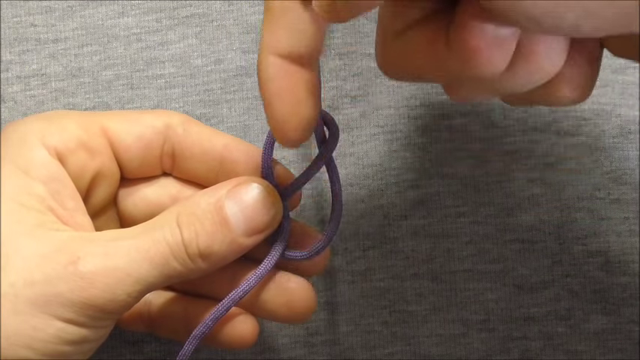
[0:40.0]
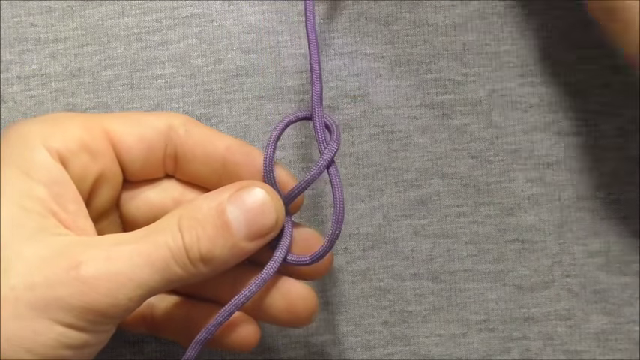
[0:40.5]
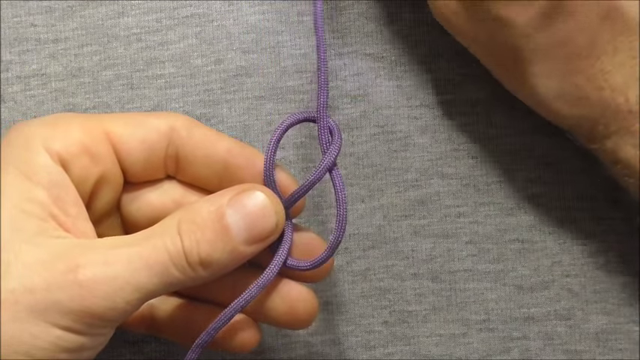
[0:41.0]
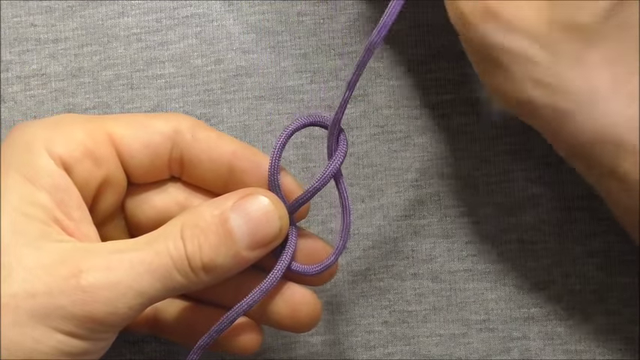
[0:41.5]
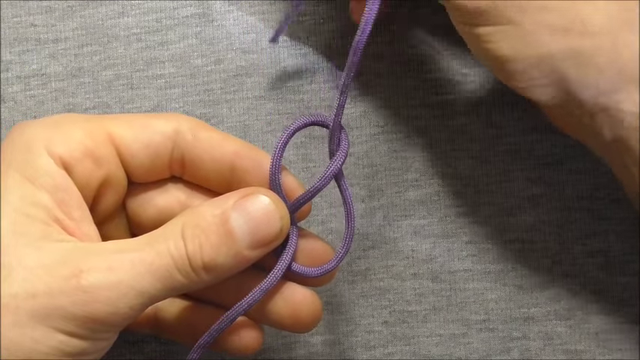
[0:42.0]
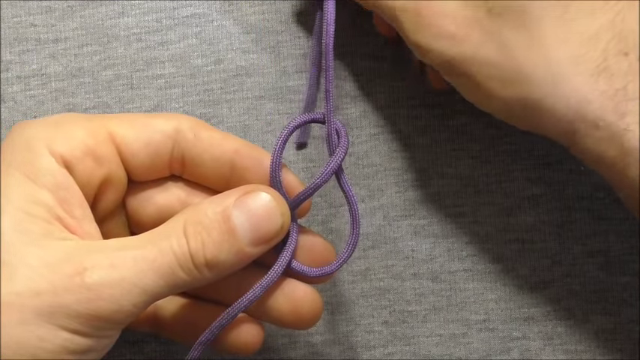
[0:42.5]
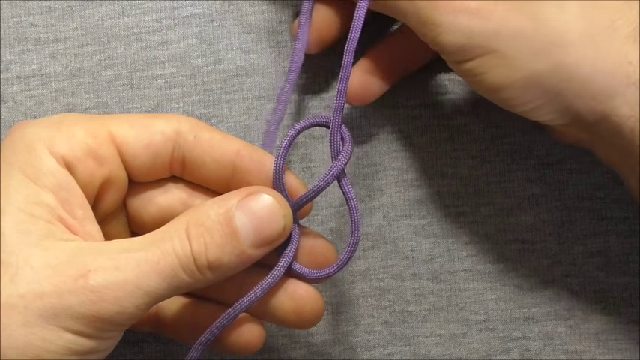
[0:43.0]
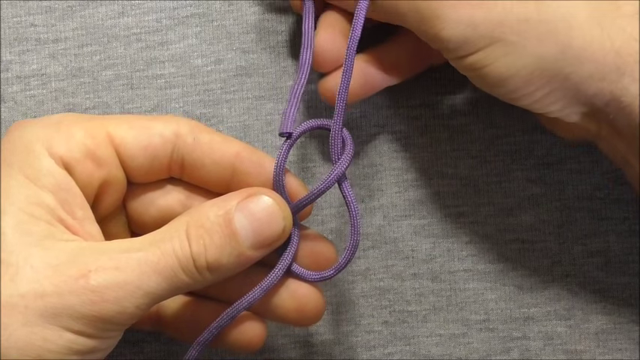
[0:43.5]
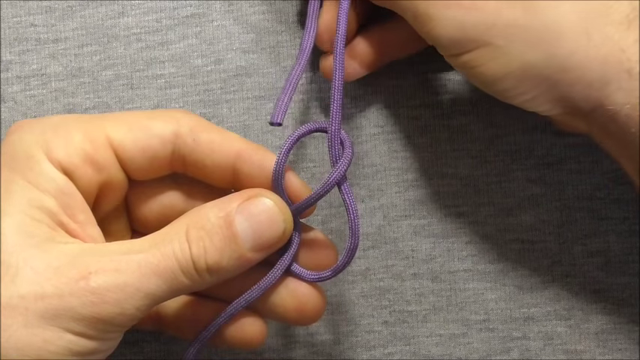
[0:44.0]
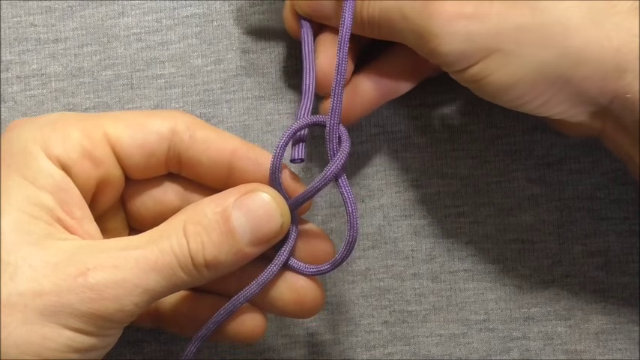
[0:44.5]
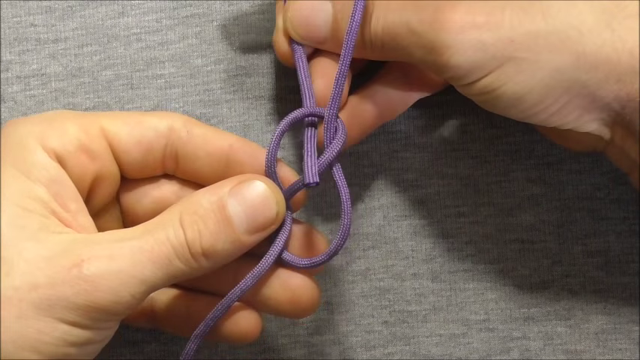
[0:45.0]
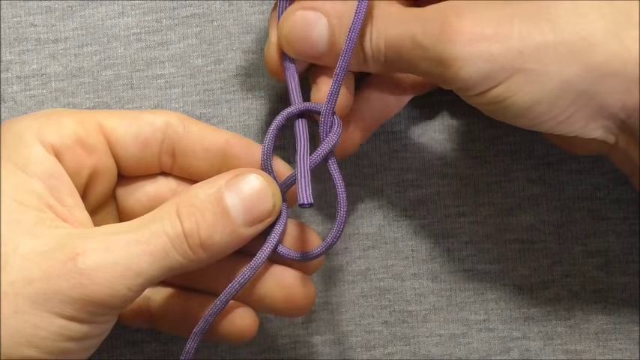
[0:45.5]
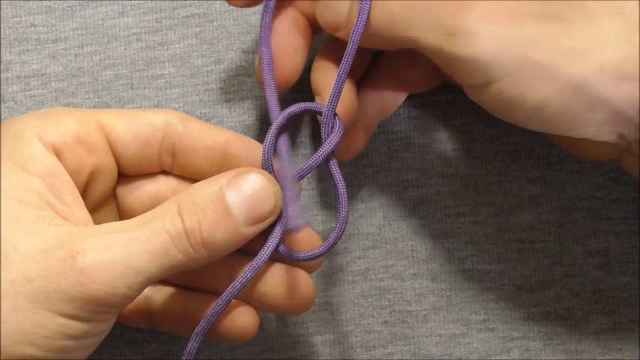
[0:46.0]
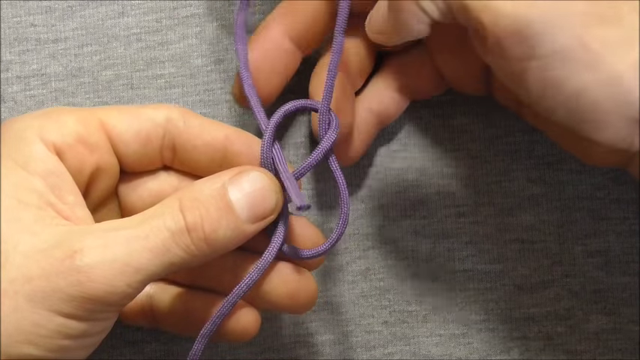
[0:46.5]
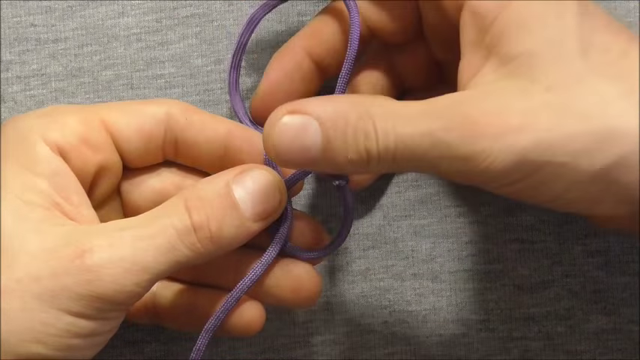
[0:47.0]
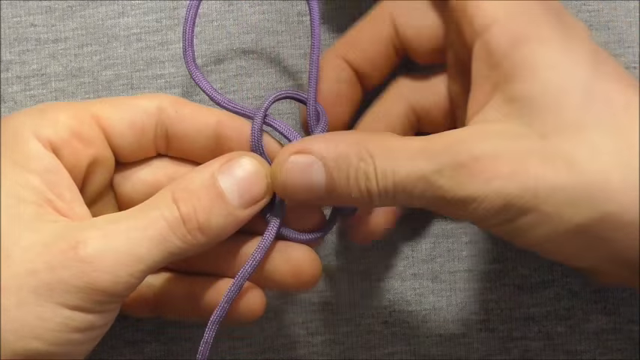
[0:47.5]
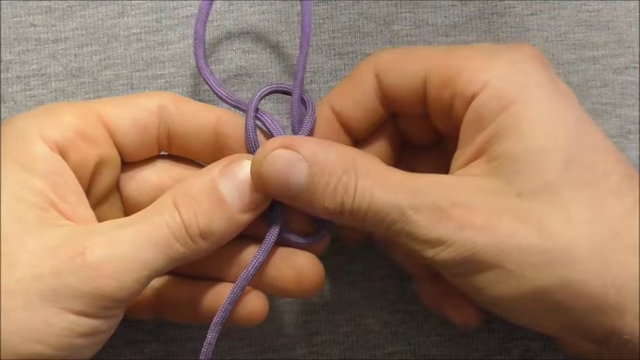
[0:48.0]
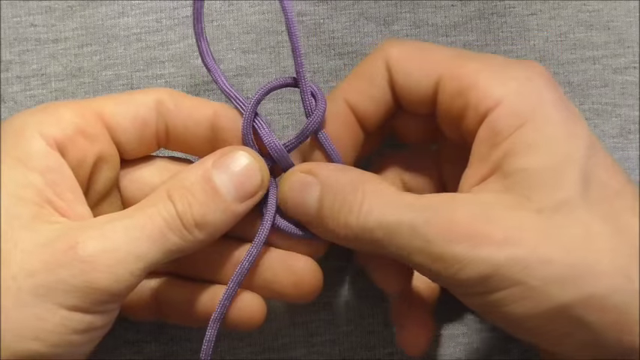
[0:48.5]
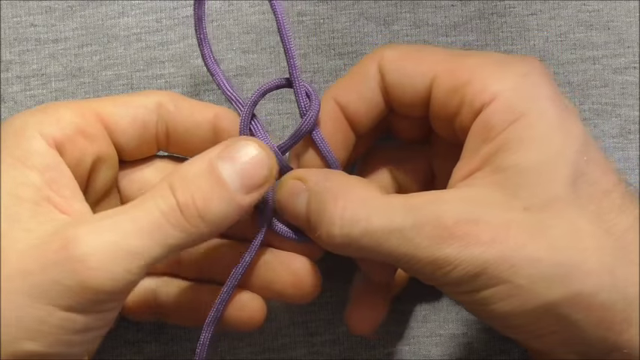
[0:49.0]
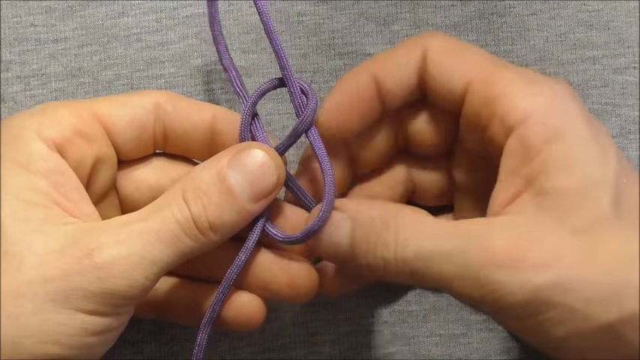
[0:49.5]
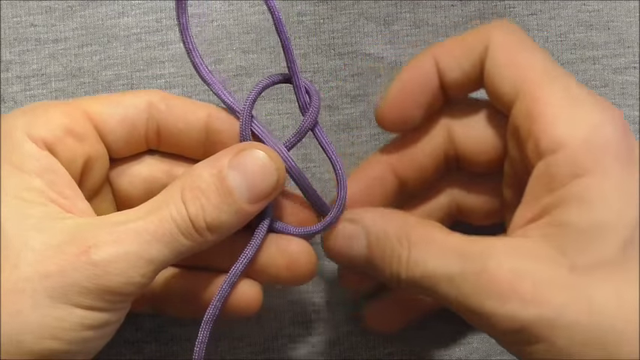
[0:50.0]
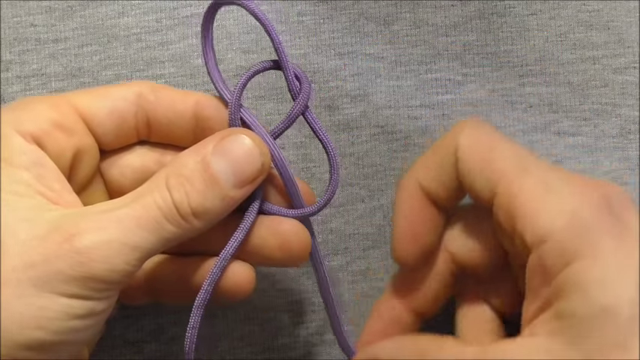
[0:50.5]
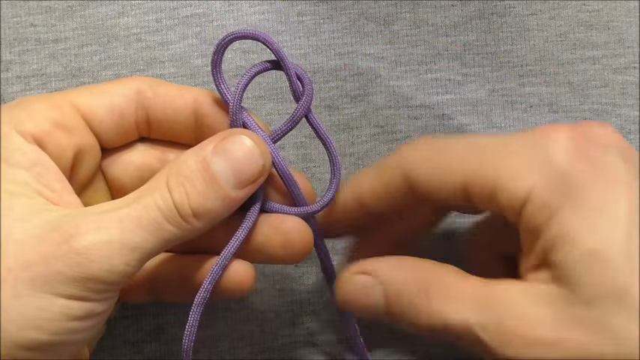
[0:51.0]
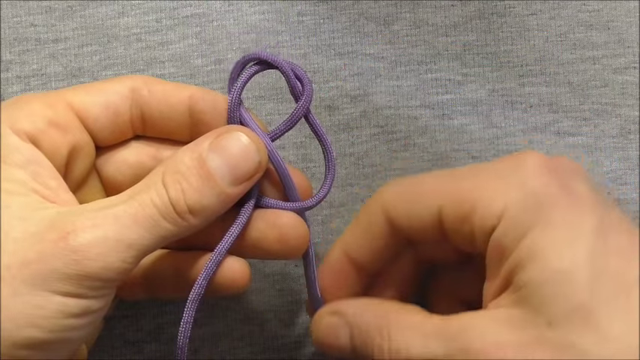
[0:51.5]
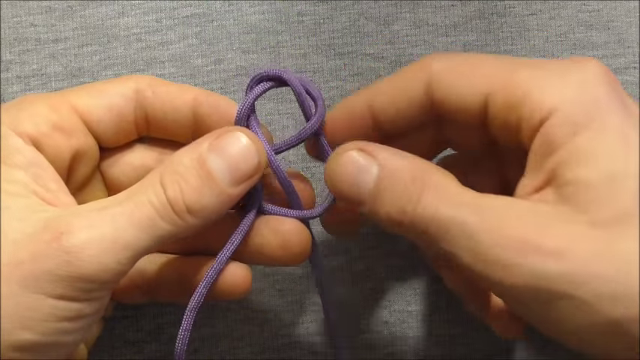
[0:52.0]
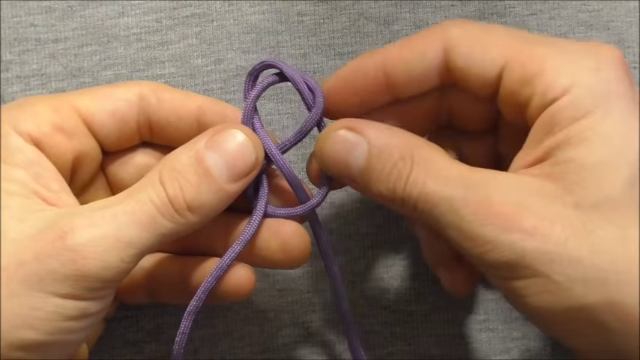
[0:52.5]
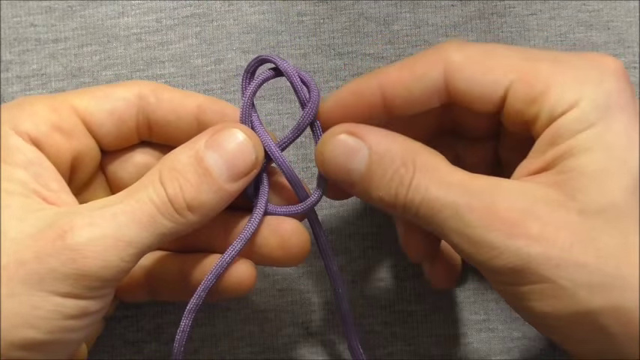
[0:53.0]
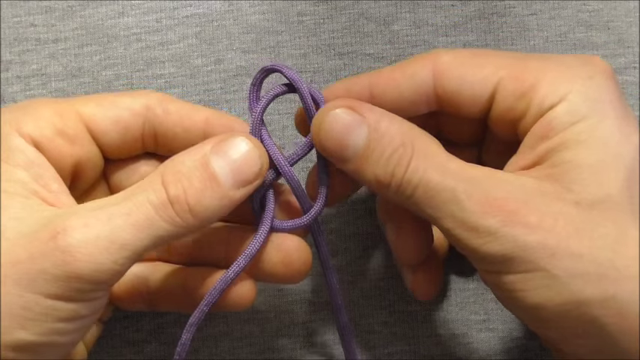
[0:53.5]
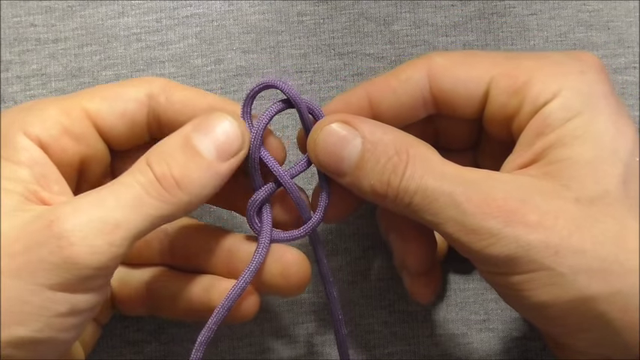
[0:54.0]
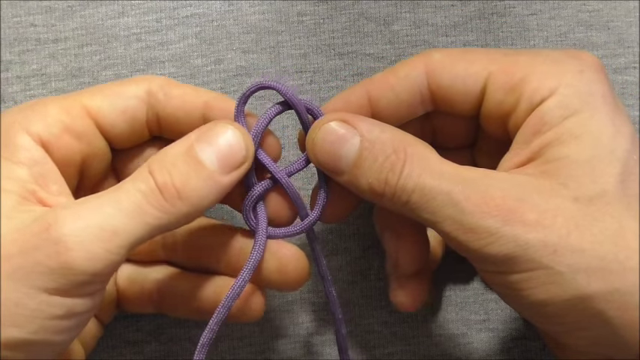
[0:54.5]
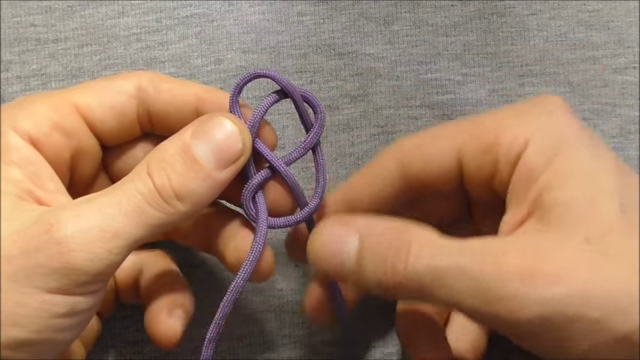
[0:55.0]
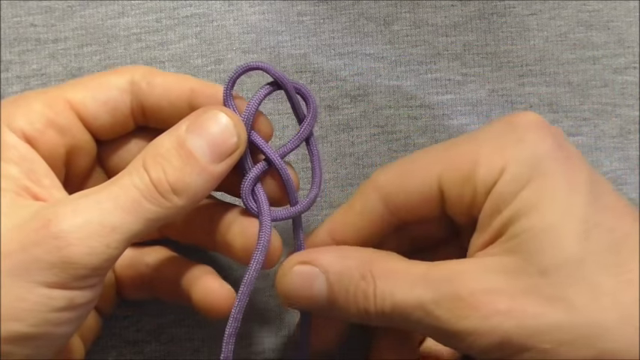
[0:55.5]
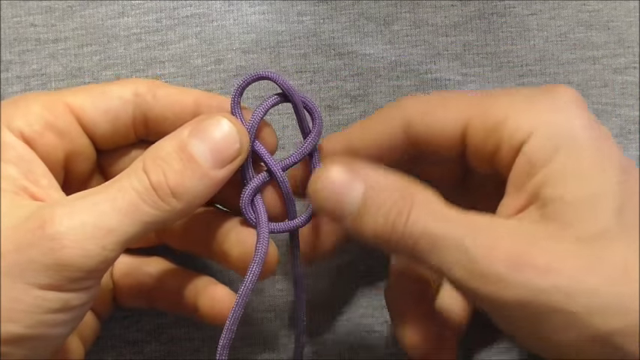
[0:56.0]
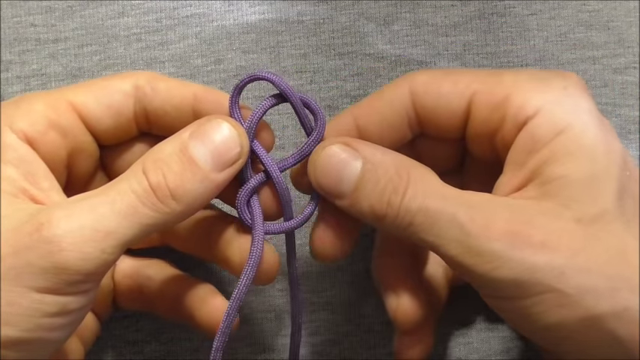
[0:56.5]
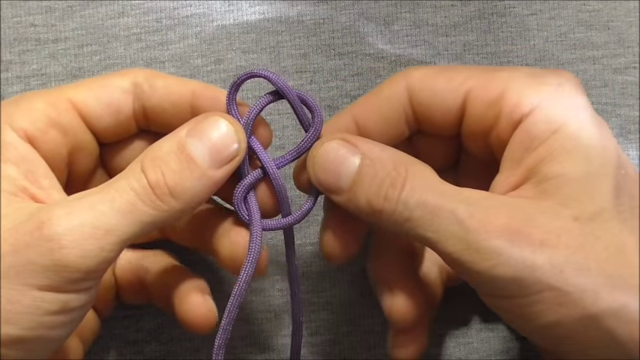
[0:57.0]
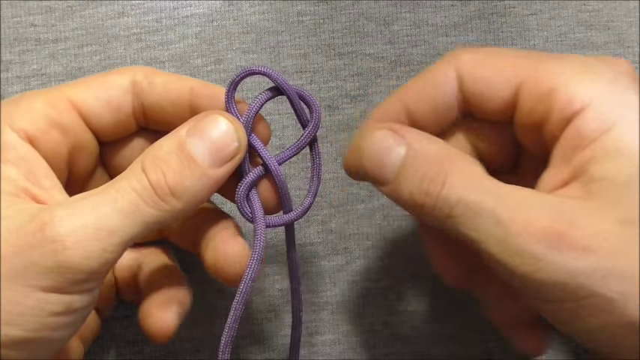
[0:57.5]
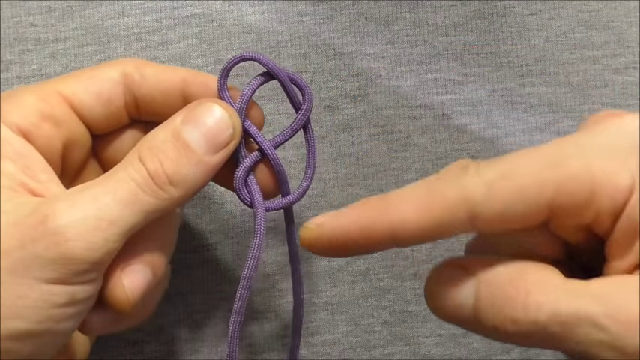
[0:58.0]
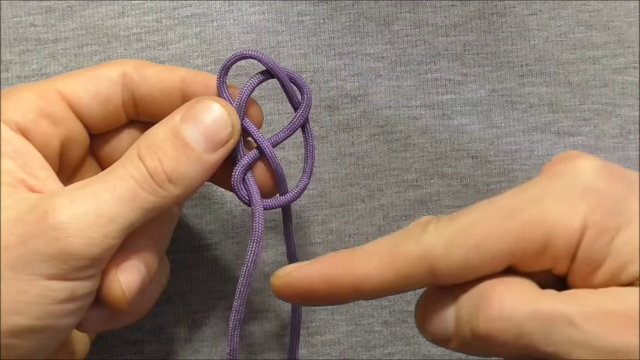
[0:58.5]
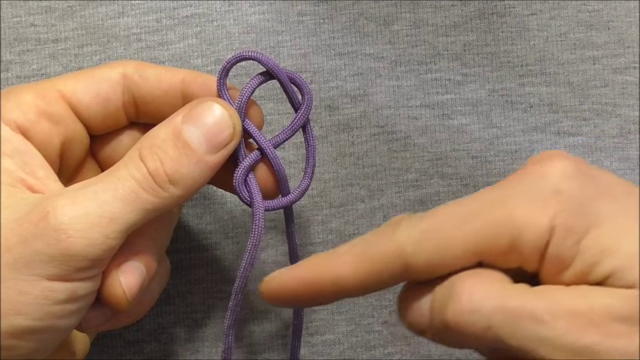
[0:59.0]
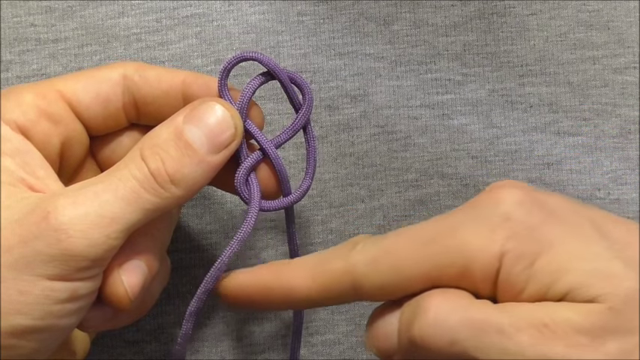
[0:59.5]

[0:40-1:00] A left hand holds what looks like a deep purple shoelace that has been looped into two loops, while the right index finger makes a downward motion as if showing the next direction of the loop. The hands are displayed against a gray knit-like fabric background. The right hand gently pushes the end of the thick, shoelace-like fabric into the top loop, then pulls the end through the second loop at the bottom to create a third loop. The fingers then rearrange the loop using the thumb and index finger of both hands to put it in place, creating a complicated loop system. The right index finger points to the trailing ends of the rope-like fabric and pushes the one on the left backwards.